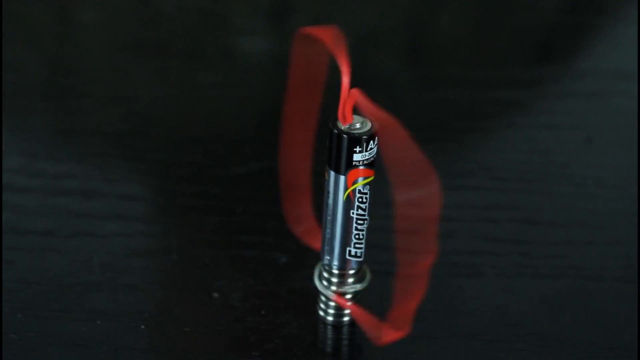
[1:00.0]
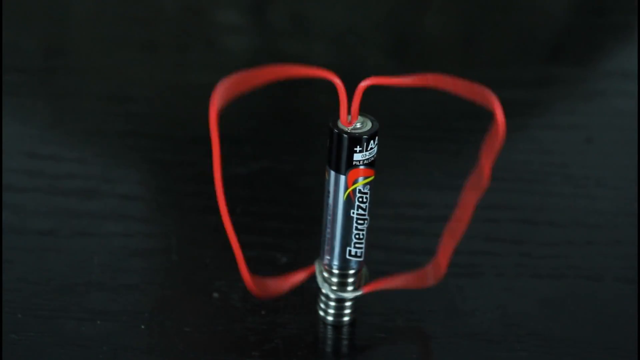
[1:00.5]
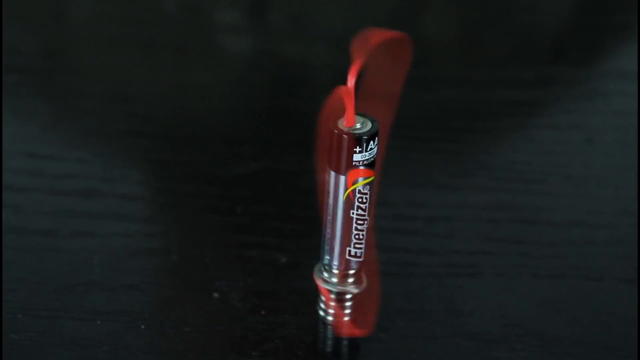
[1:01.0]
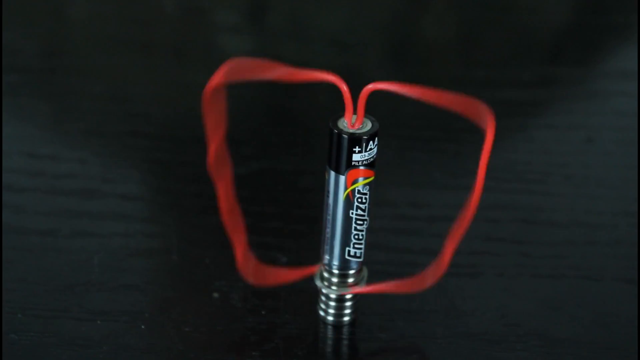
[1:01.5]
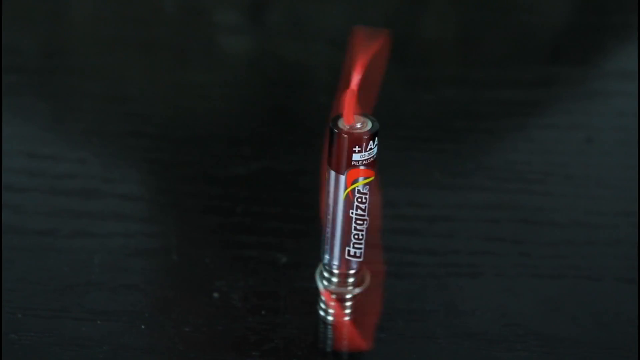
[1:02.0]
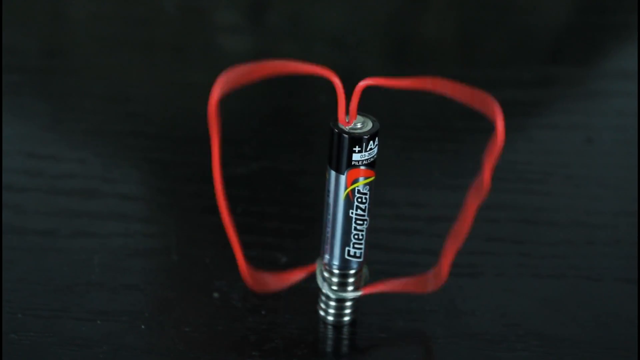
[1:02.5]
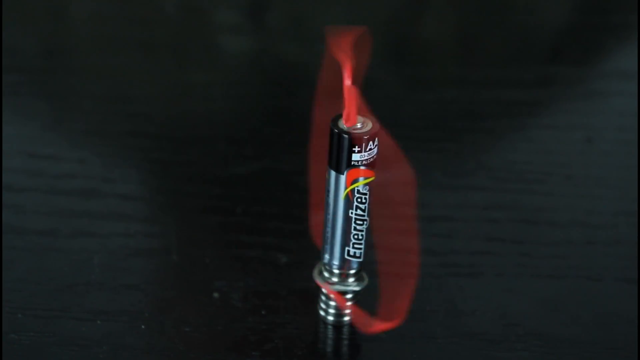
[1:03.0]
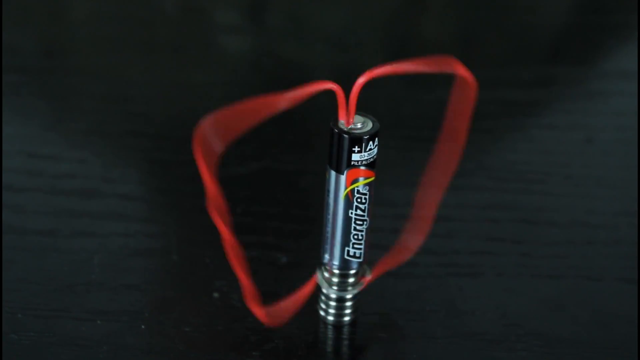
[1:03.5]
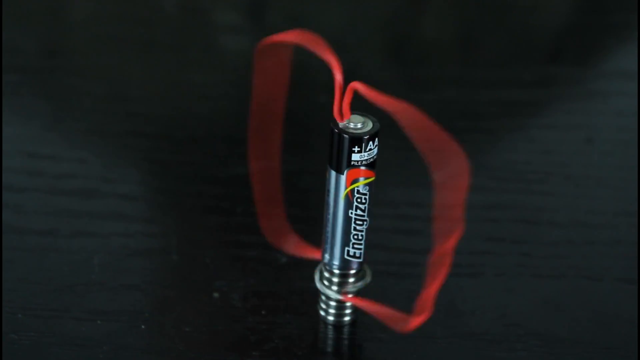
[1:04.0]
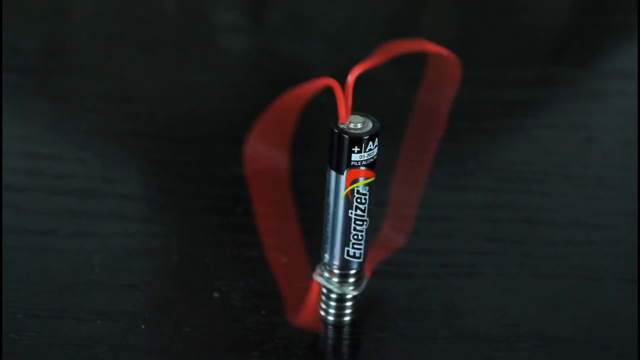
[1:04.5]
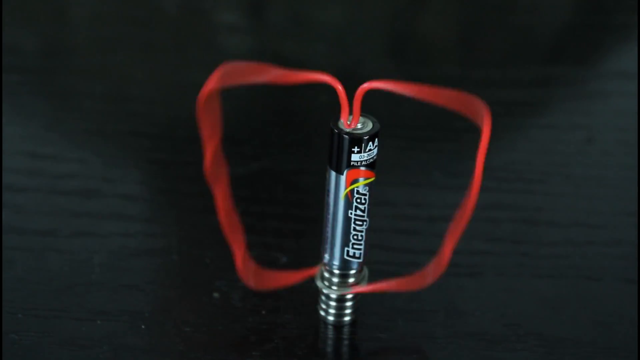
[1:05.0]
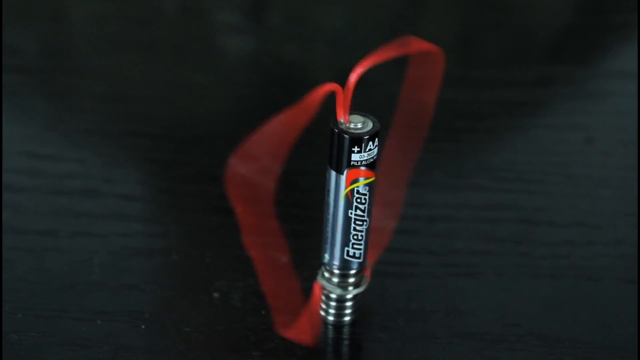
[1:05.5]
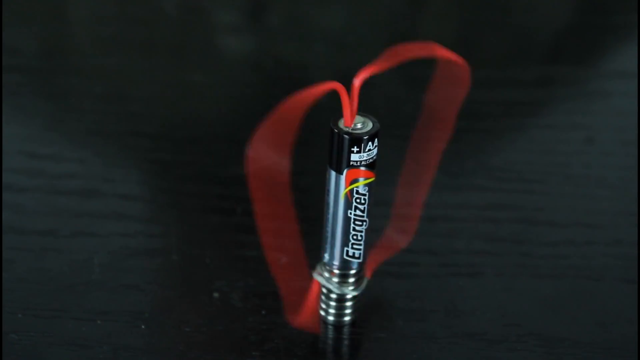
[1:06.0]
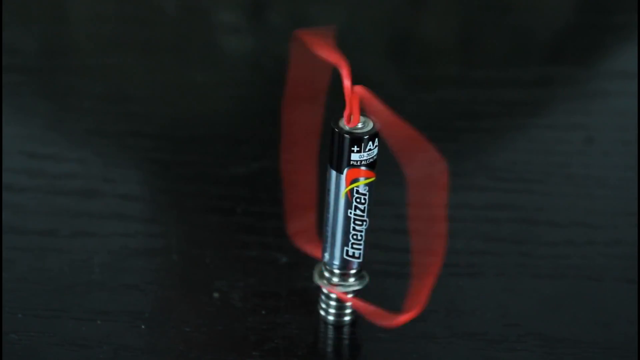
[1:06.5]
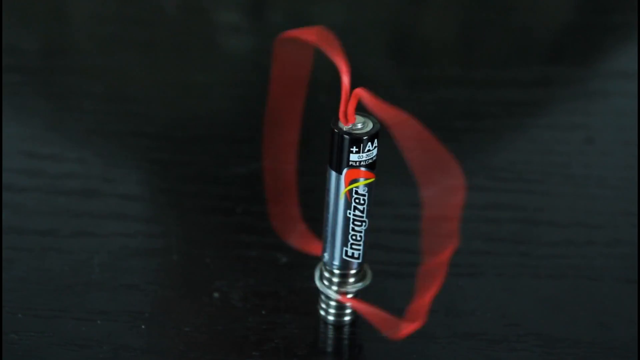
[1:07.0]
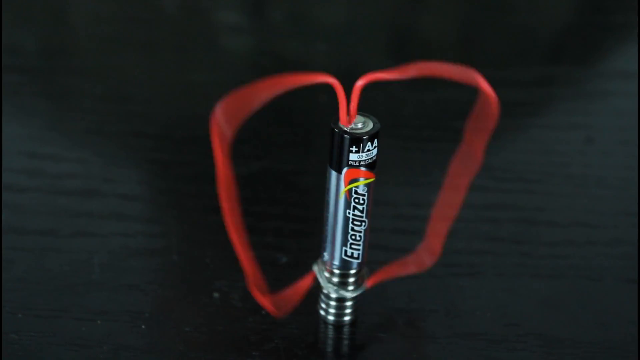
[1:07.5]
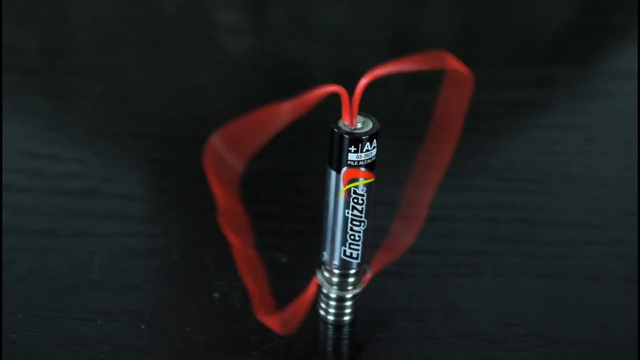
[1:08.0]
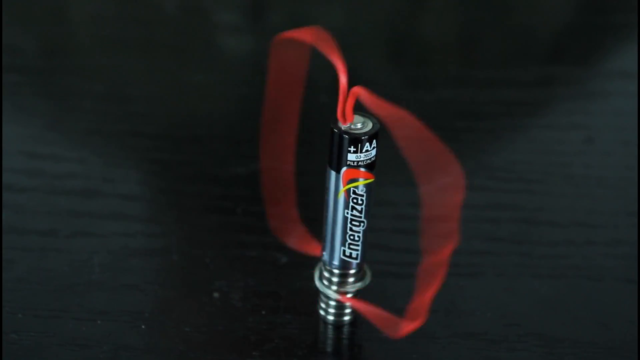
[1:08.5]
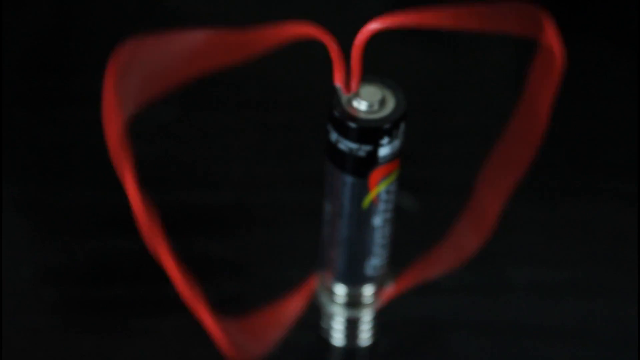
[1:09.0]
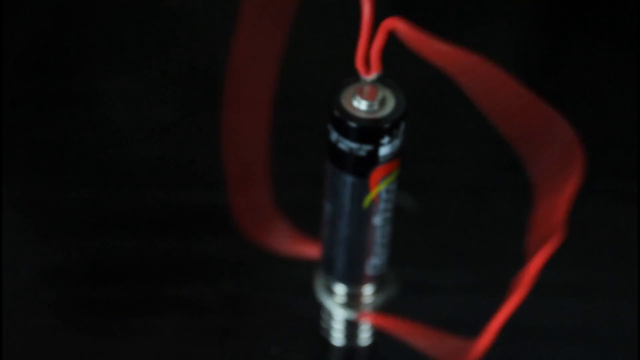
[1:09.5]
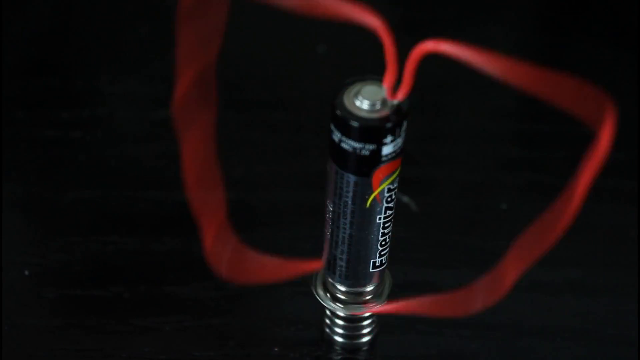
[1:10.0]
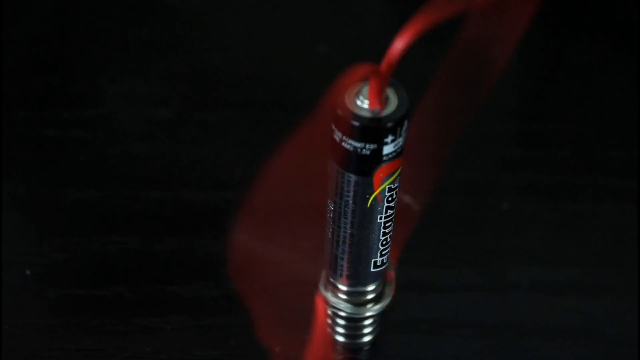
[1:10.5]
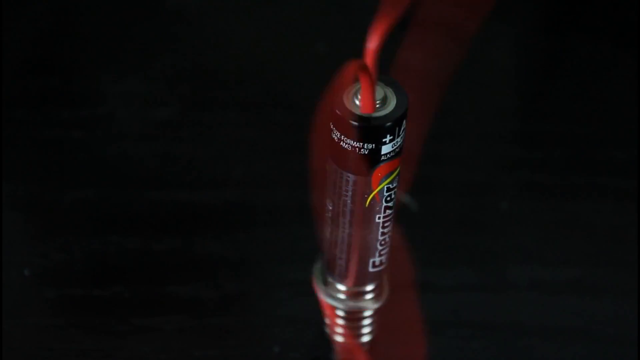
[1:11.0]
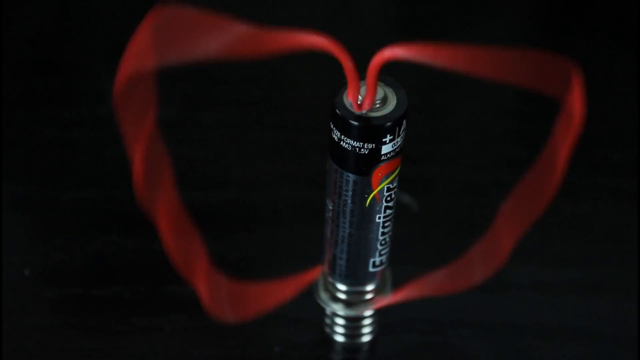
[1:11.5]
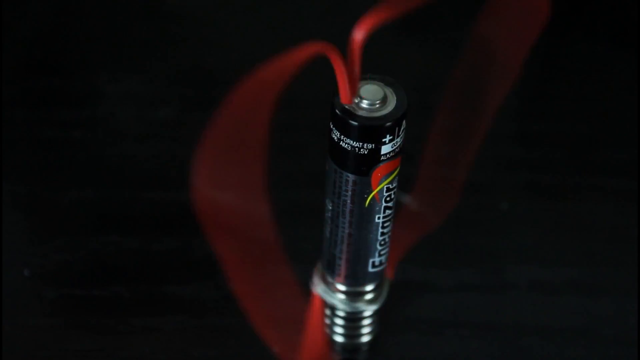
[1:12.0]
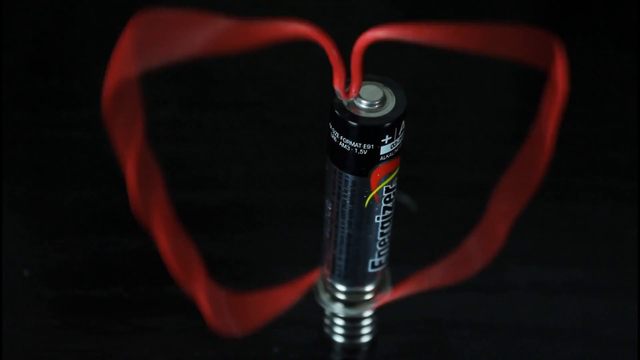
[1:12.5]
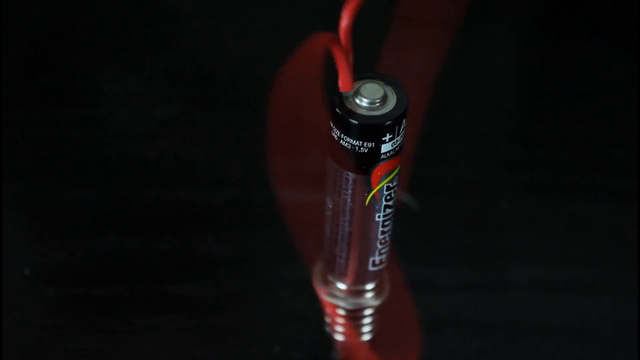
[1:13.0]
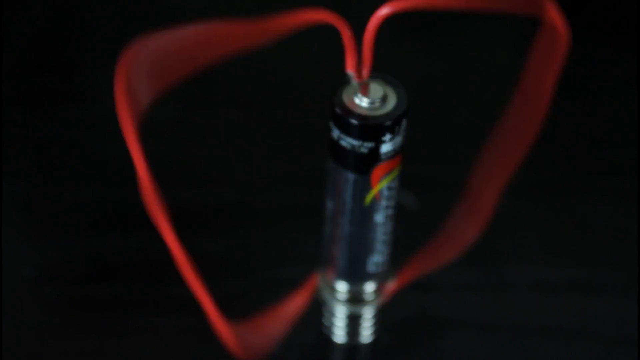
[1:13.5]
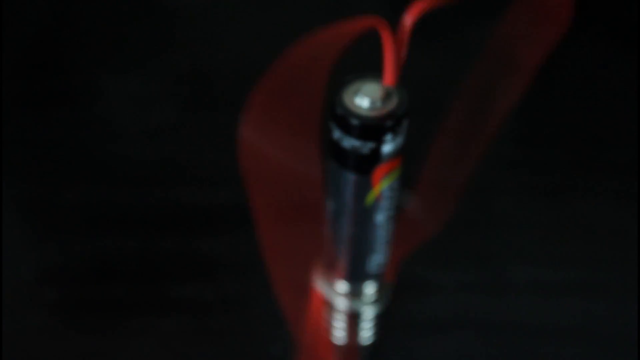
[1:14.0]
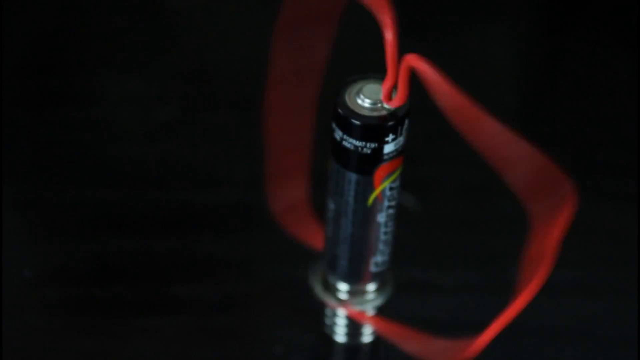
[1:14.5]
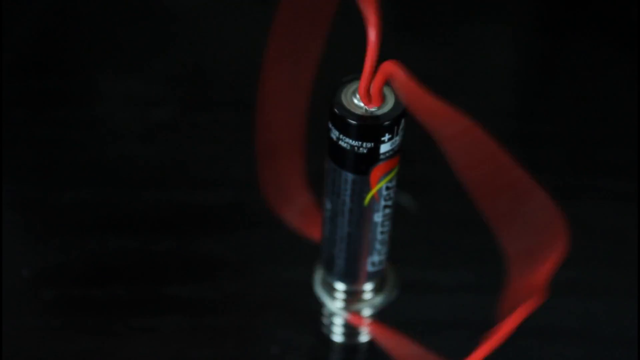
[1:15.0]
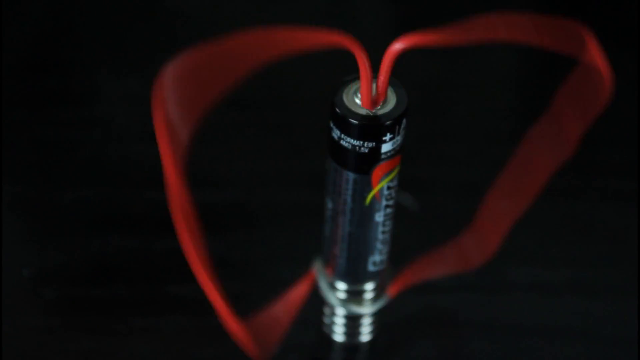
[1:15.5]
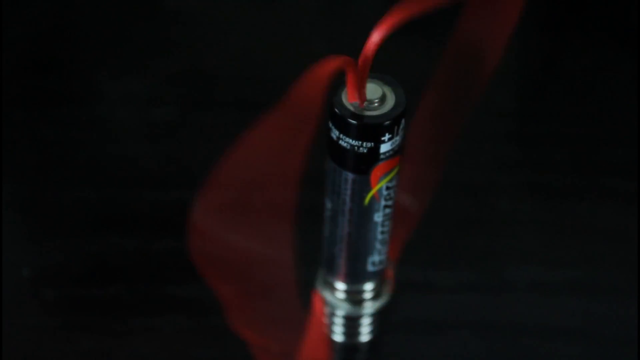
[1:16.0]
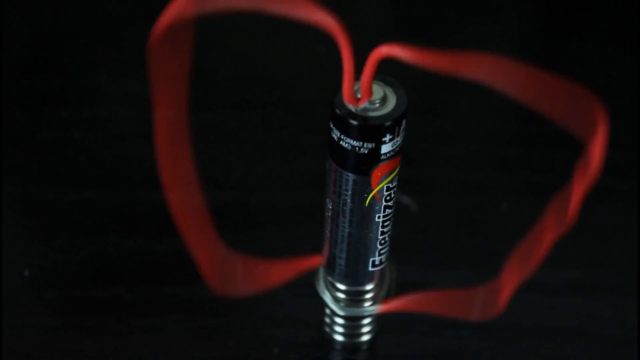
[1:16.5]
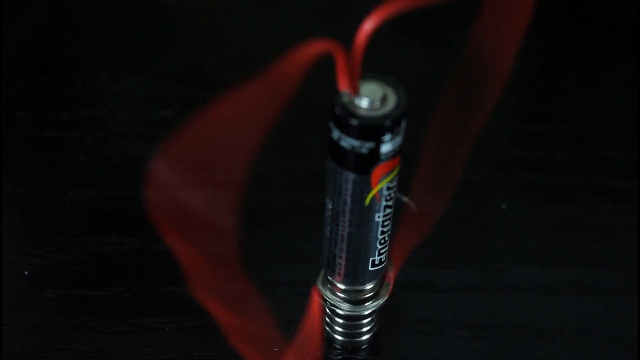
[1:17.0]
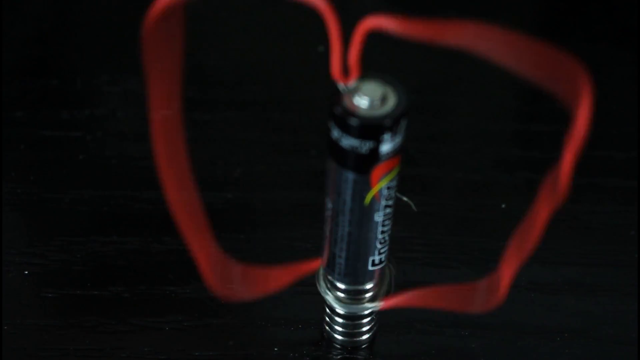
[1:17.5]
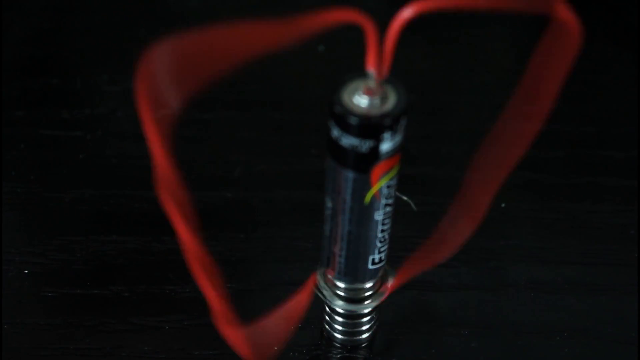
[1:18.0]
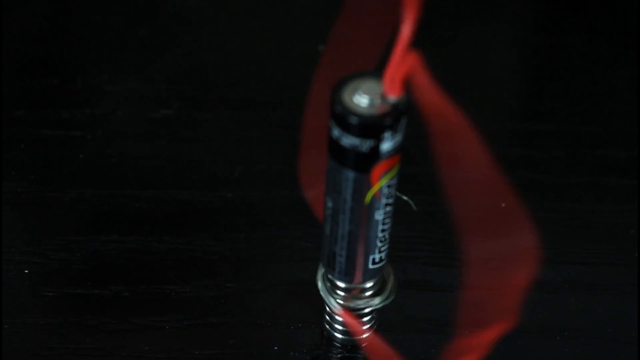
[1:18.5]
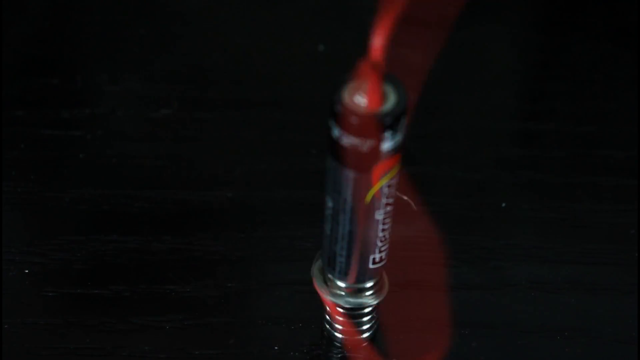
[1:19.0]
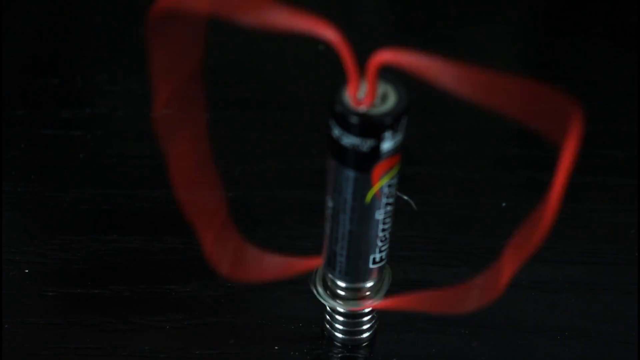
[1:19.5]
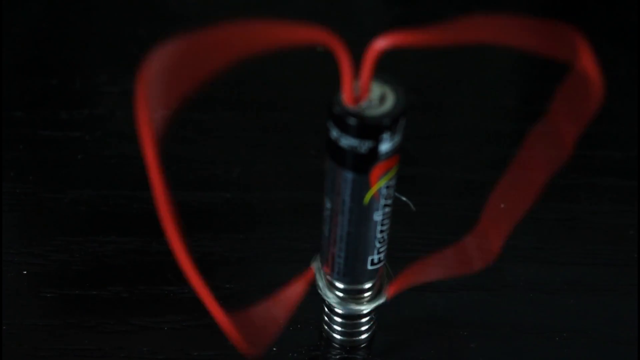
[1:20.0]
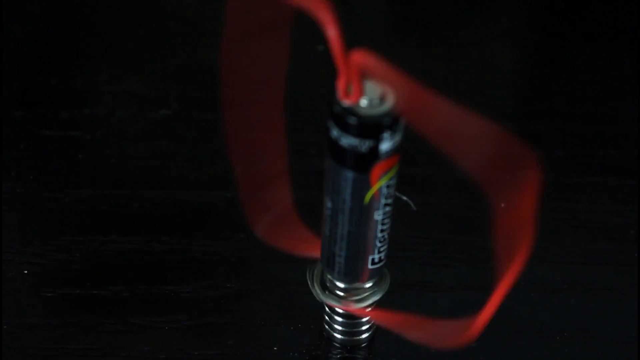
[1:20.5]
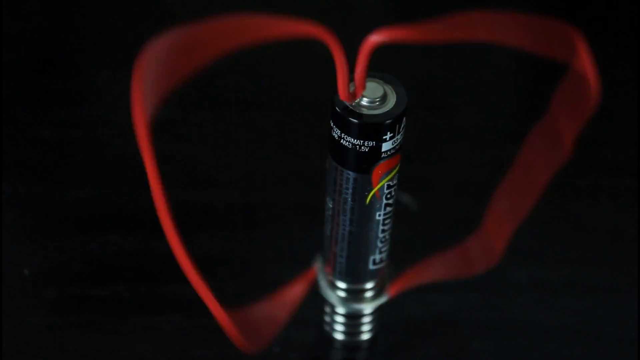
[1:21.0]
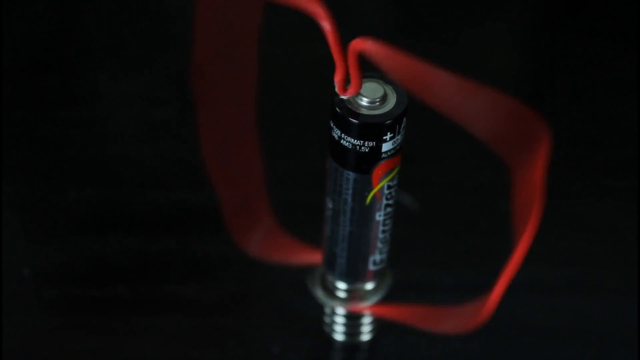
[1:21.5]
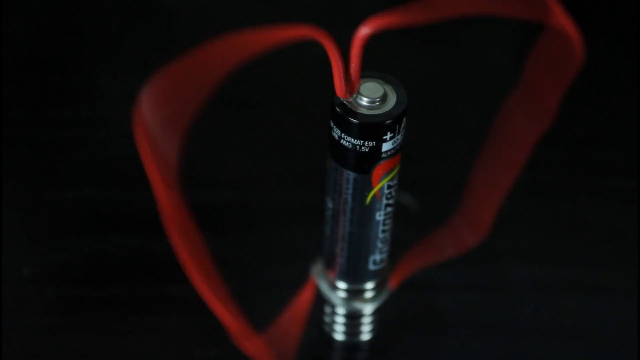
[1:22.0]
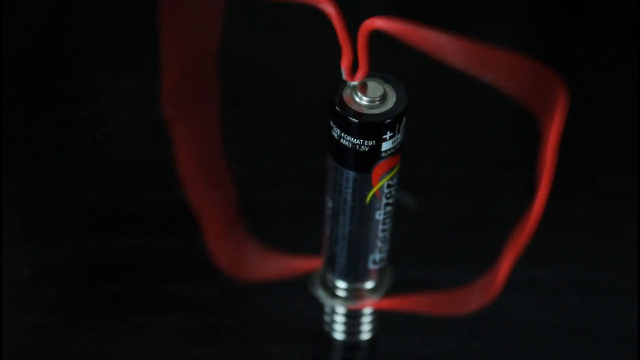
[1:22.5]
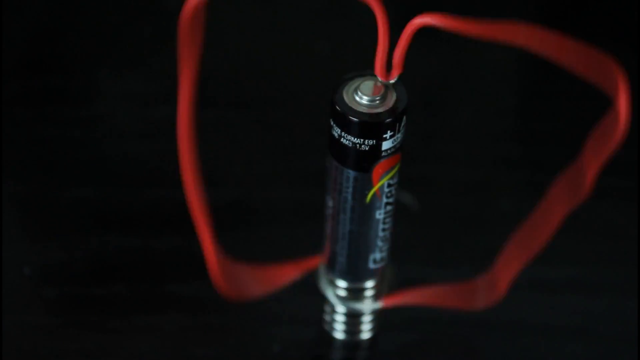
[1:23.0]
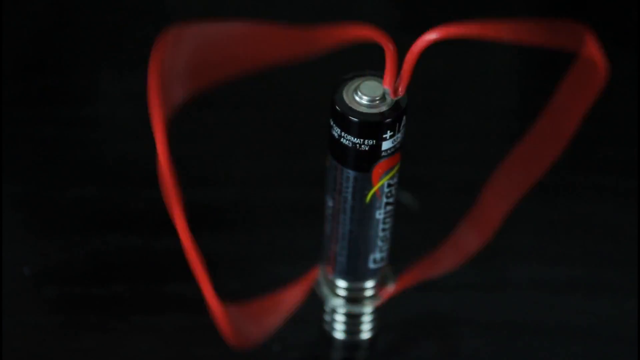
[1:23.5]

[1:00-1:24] The red wire spins so fast on top of the Energizer battery that it almost looks like there are multiple red wires spinning around on it. The view appears to zoom in a little more for a closer look at the red wire as it spins from right to left. It goes out of focus a little, then focuses again. The divot, the little dip in the wire, appears not to be connected to the elevated top of the AA battery but to be going around that round elevated part, which seemingly makes it spin even faster. The man's hands are not visible.